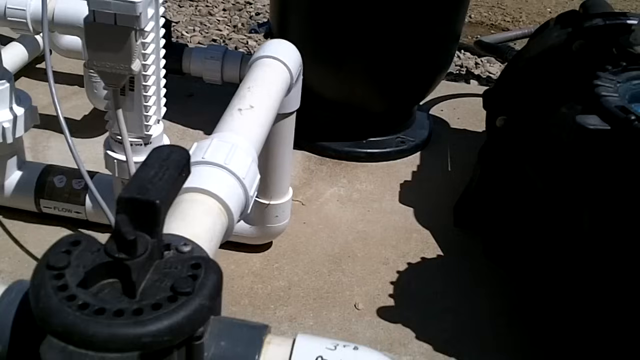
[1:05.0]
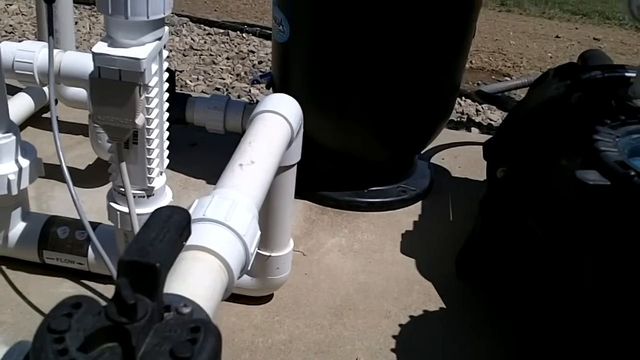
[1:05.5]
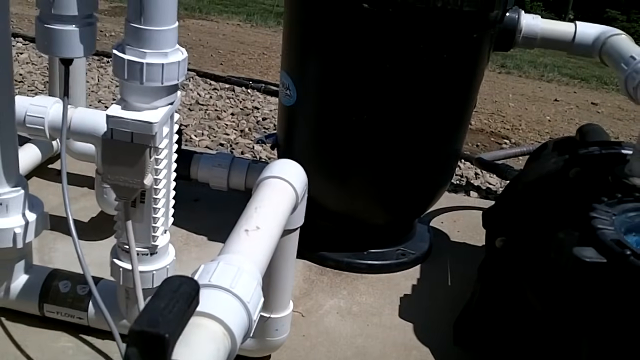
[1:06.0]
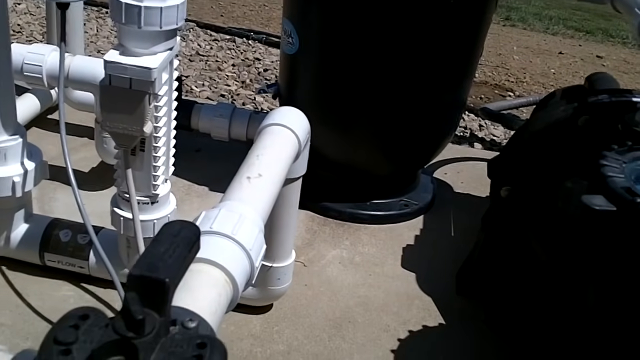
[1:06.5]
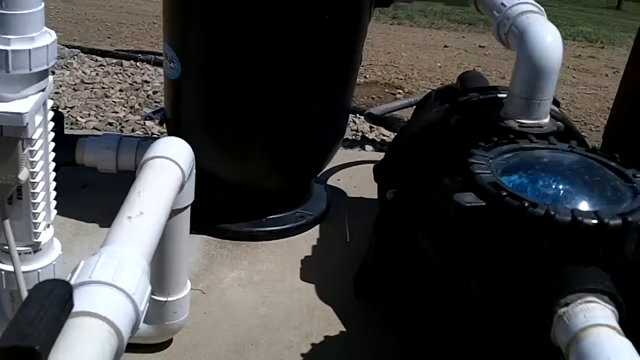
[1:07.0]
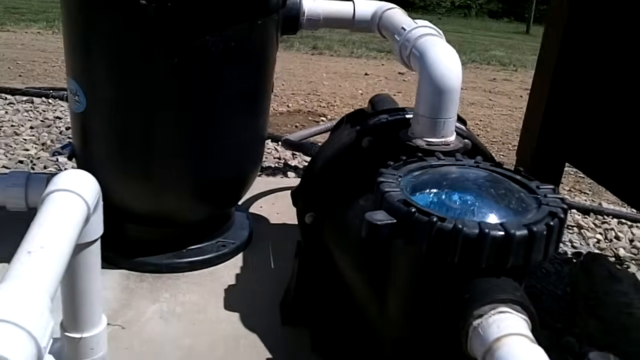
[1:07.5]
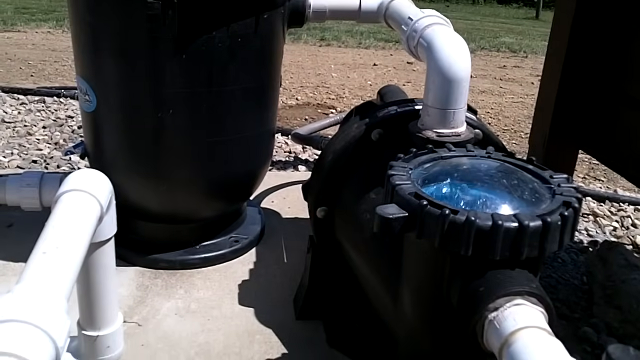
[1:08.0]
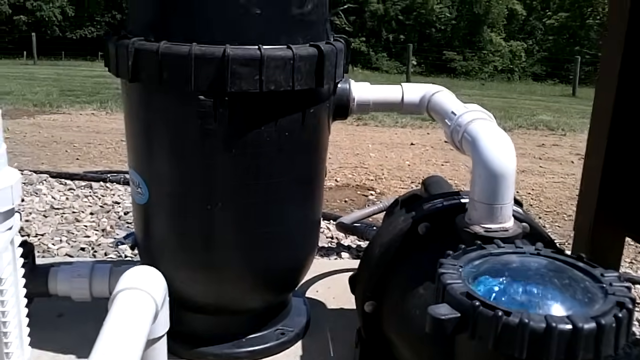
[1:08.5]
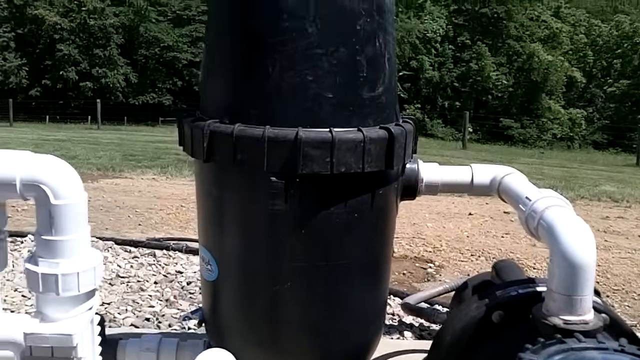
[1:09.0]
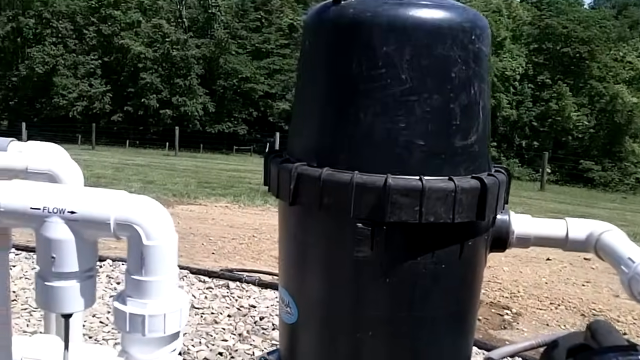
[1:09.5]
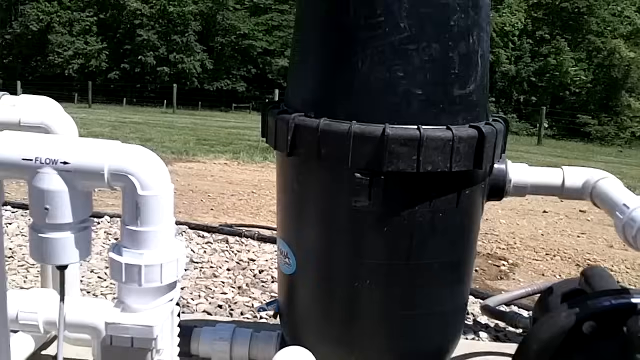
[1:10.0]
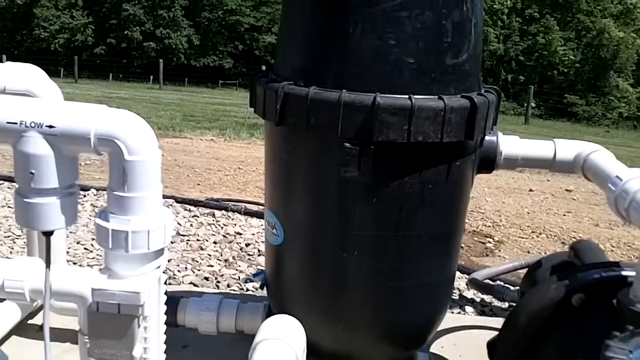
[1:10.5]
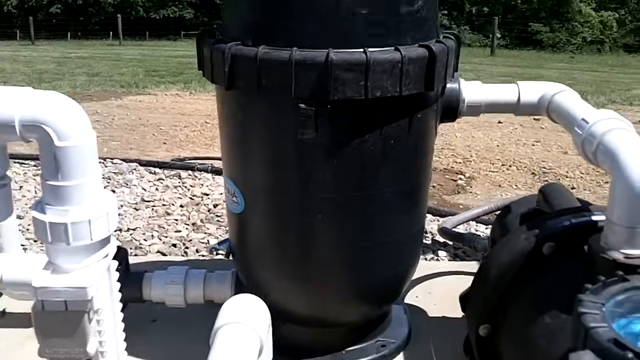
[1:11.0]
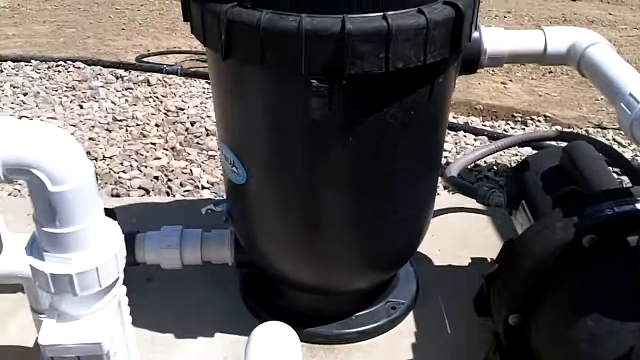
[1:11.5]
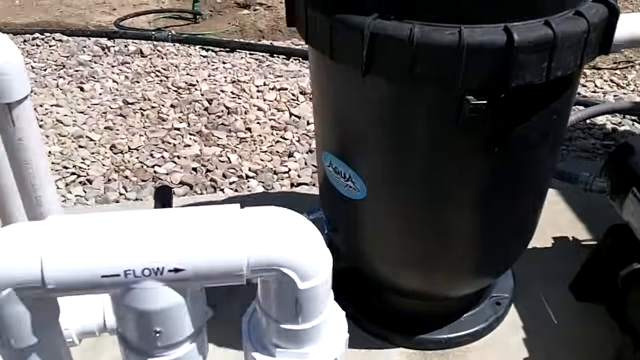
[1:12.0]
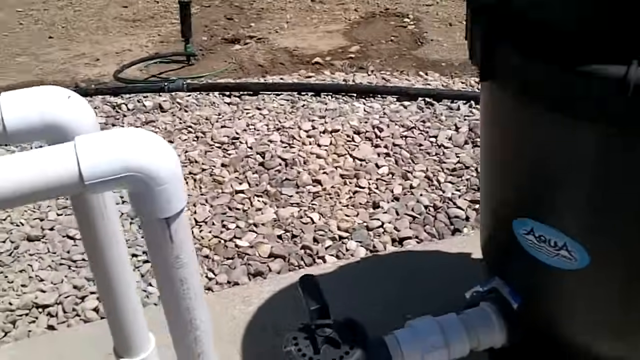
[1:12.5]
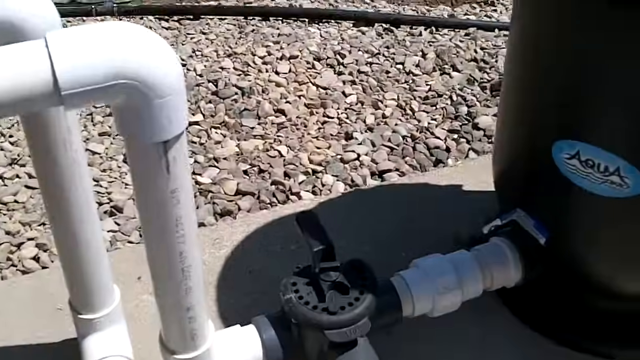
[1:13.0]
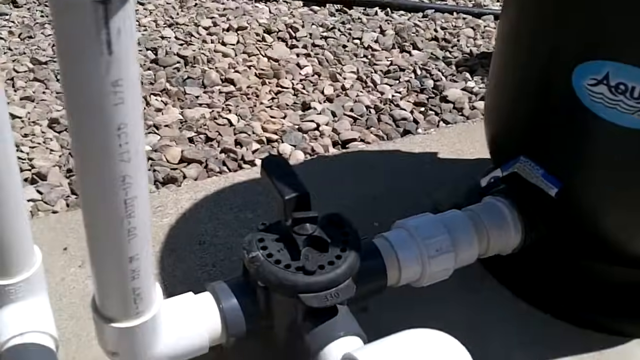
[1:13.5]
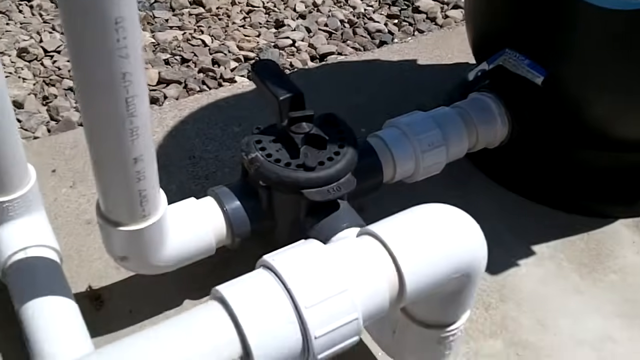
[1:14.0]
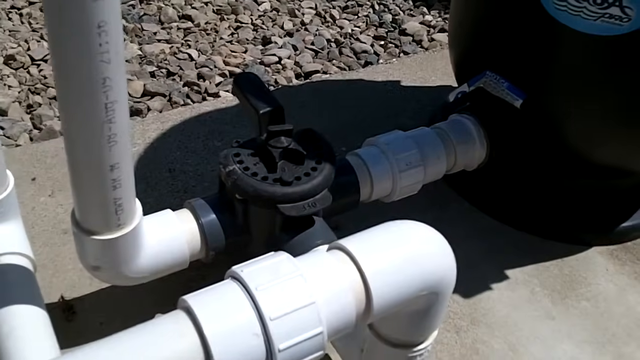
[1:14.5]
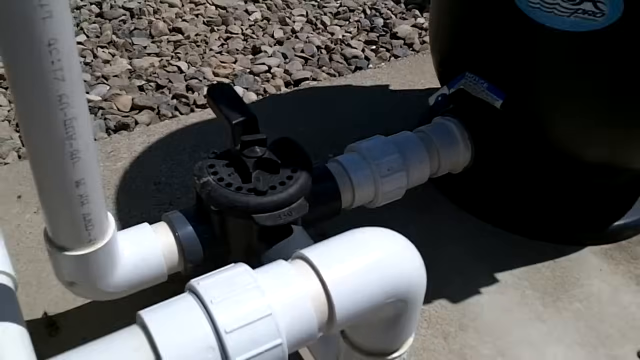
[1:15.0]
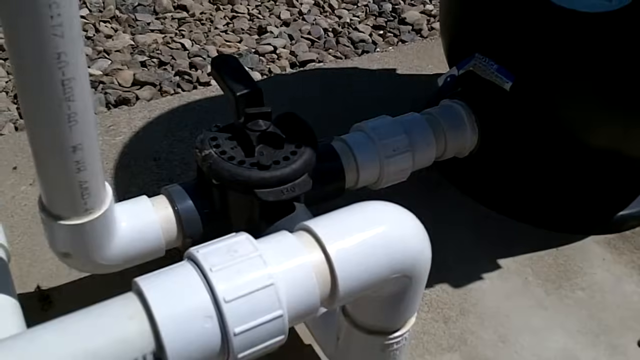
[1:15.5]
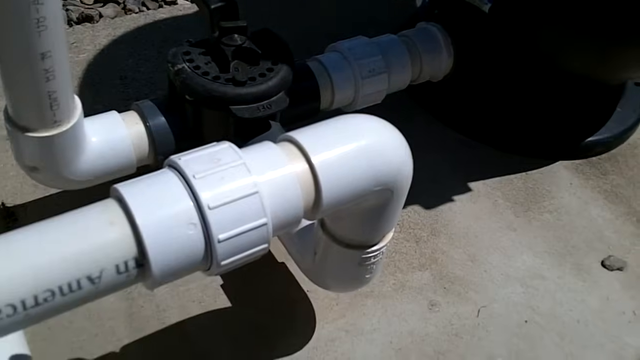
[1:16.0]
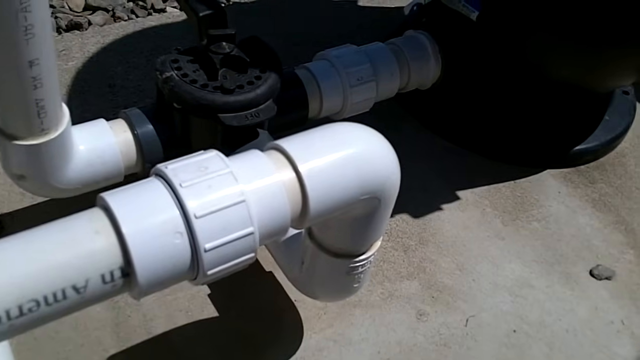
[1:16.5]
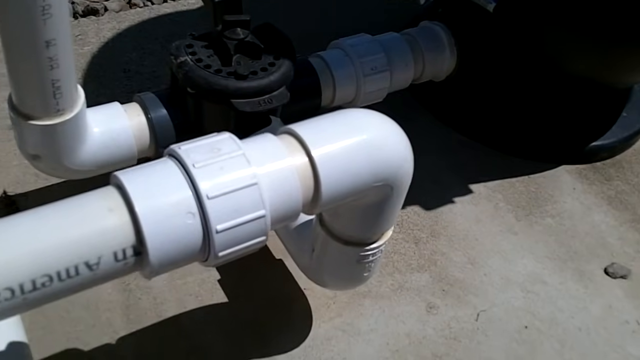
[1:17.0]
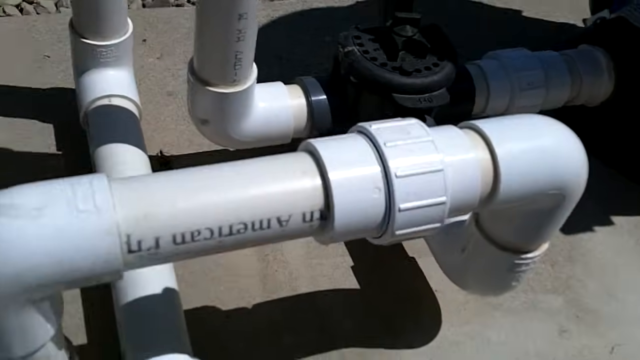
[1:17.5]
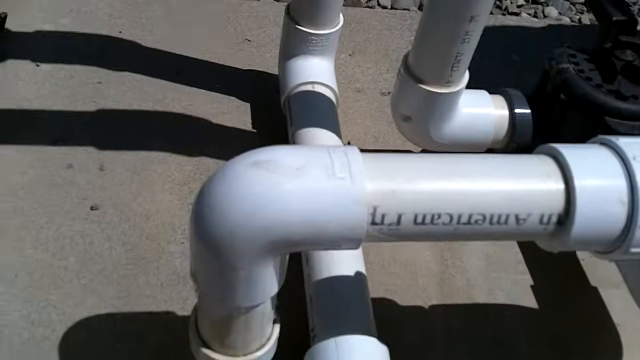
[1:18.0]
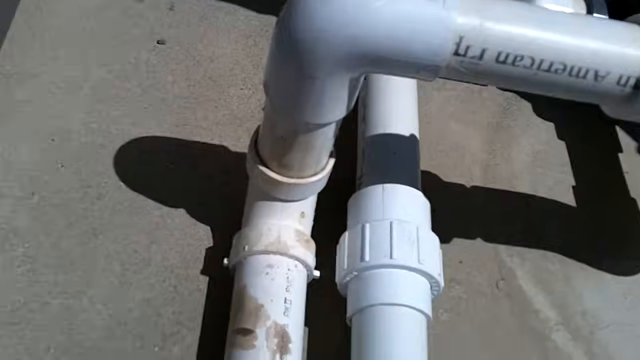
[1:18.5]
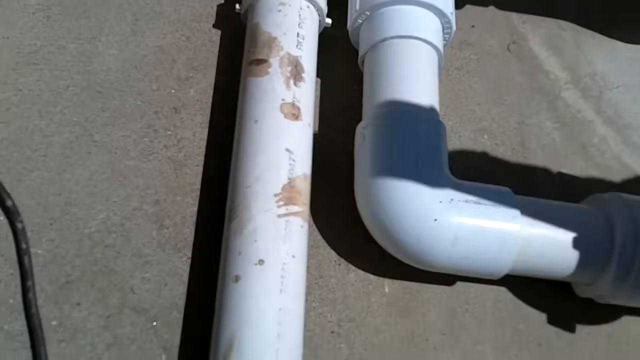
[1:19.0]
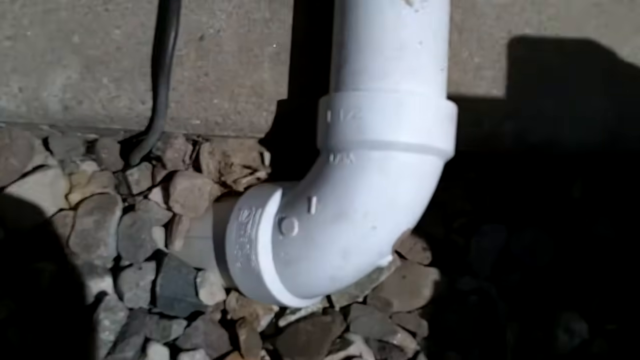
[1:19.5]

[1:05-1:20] A more detailed view shows the larger black cylinder, maybe a filter. It has a blue logo that says "Aqua". There are more looks at the white tubing, almost as if someone is giving a tour of the equipment. The large black cylinder looks almost a couple of feet high and is very prominent; it almost looks like a trash can, with white tubing coming out of it, another of the black lever pieces, and a lot of tubing. It is on the cement, with dirt, grass and a lot of rocks in the background. Some of the tubing has dirt and brown marks on it. On the right side, the black cylinder with the blue glass on top is visible.